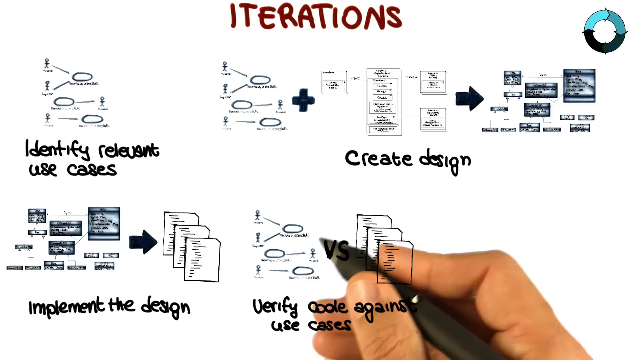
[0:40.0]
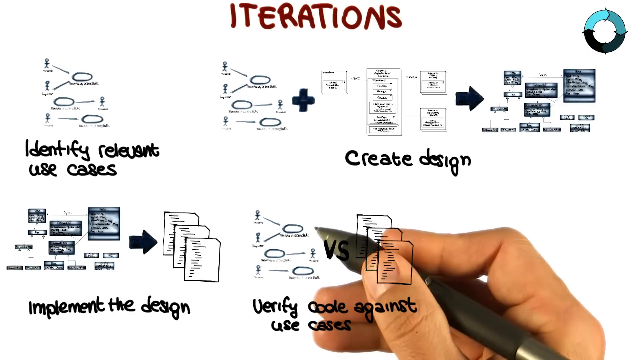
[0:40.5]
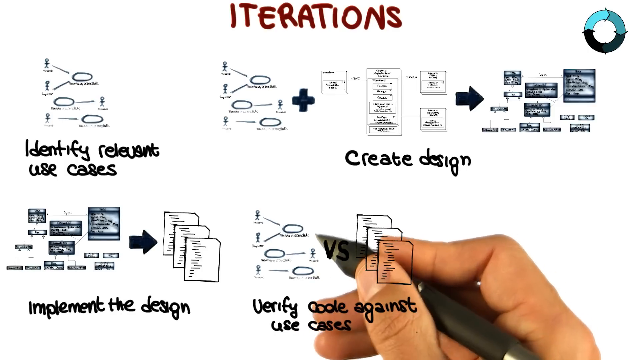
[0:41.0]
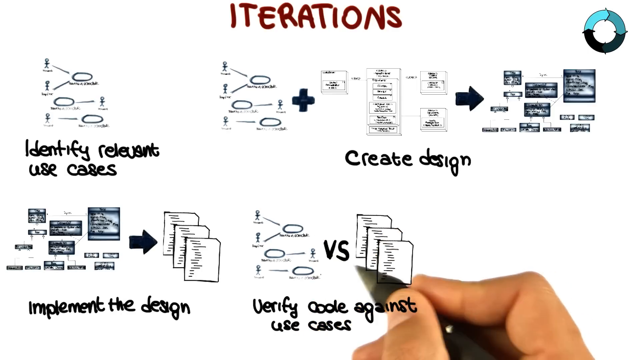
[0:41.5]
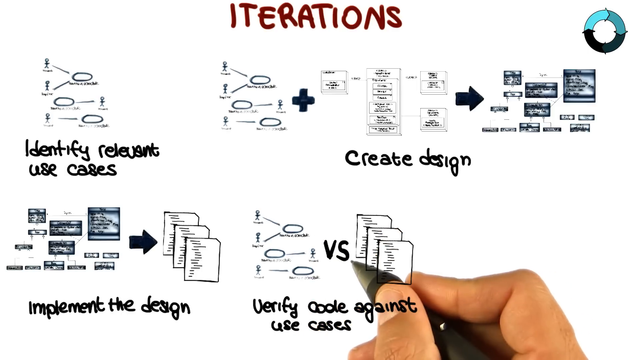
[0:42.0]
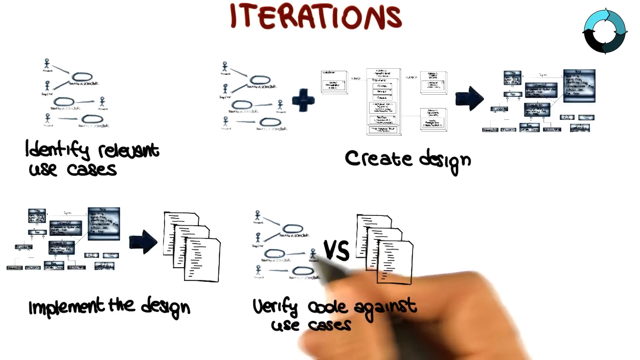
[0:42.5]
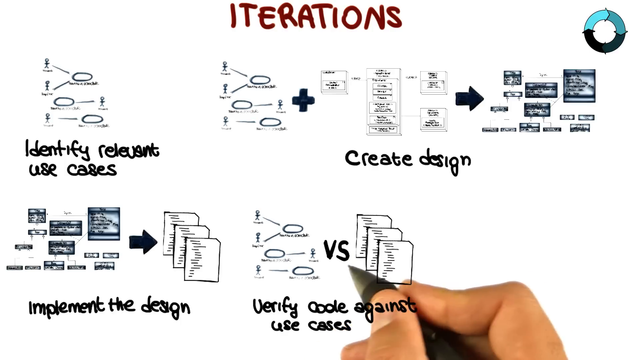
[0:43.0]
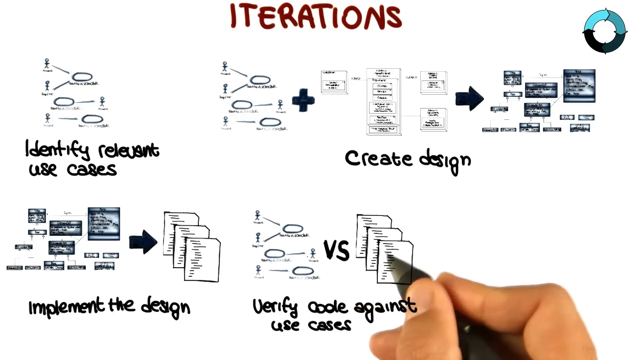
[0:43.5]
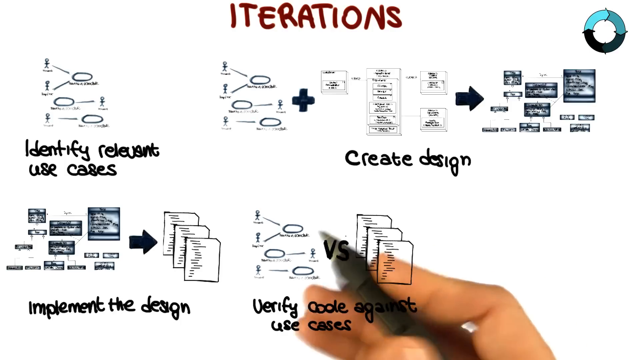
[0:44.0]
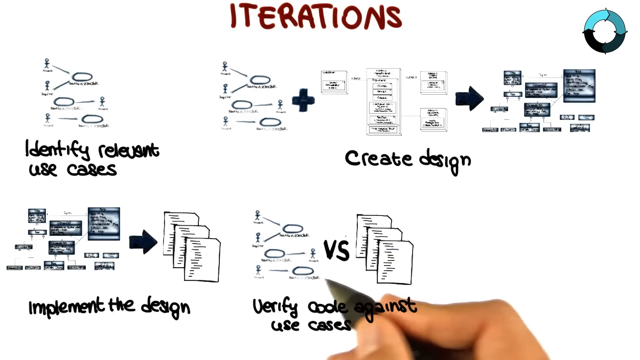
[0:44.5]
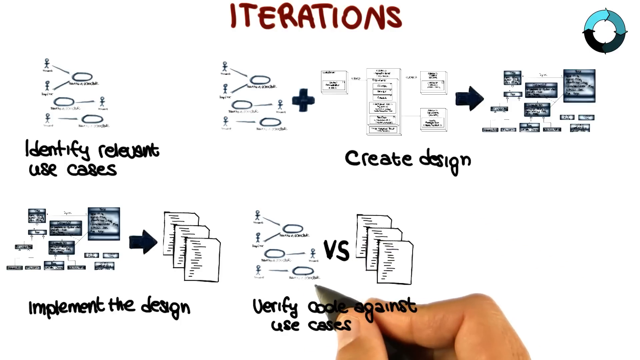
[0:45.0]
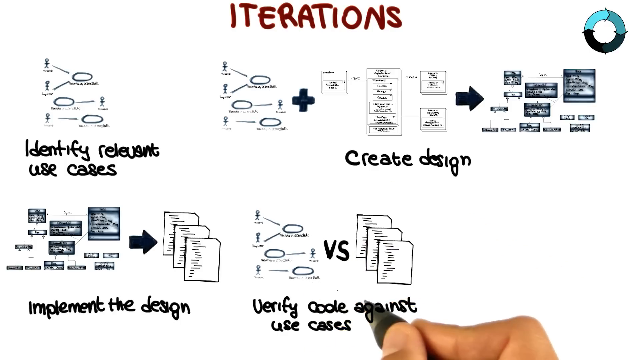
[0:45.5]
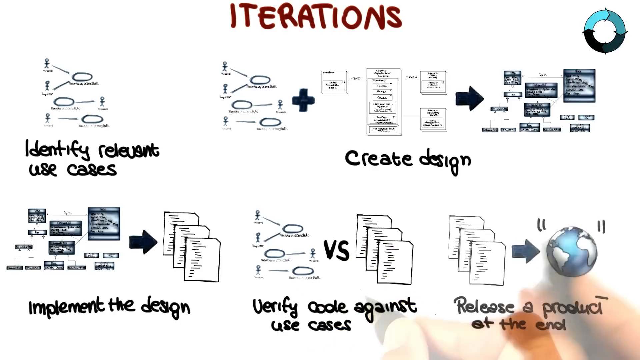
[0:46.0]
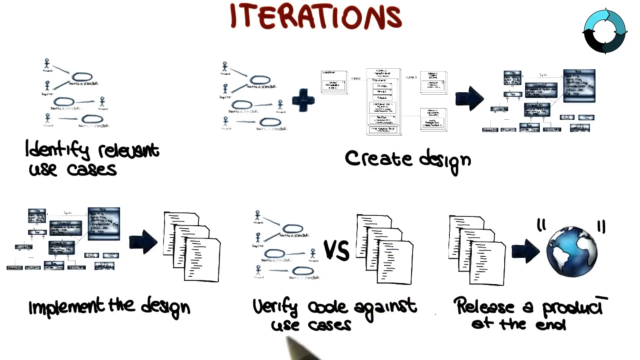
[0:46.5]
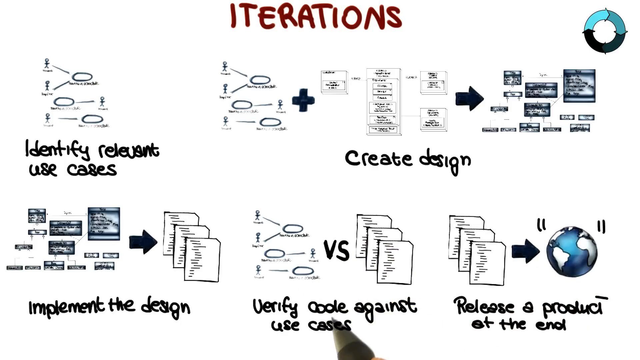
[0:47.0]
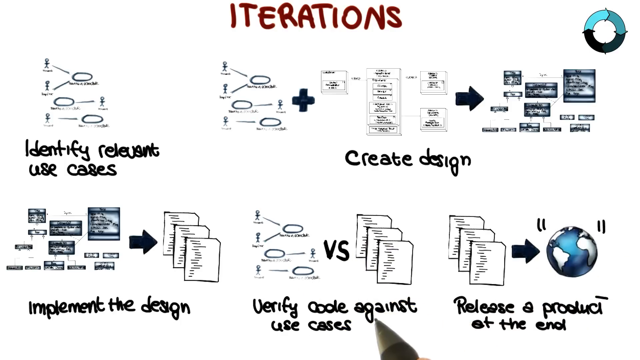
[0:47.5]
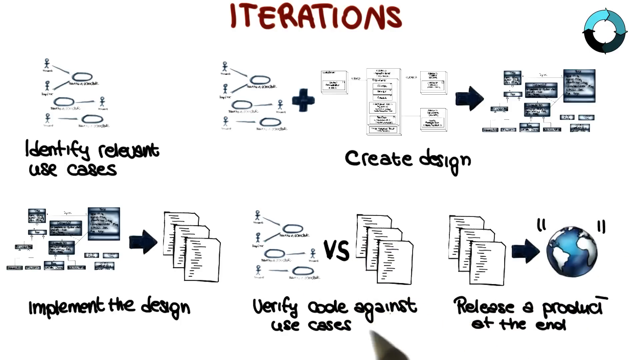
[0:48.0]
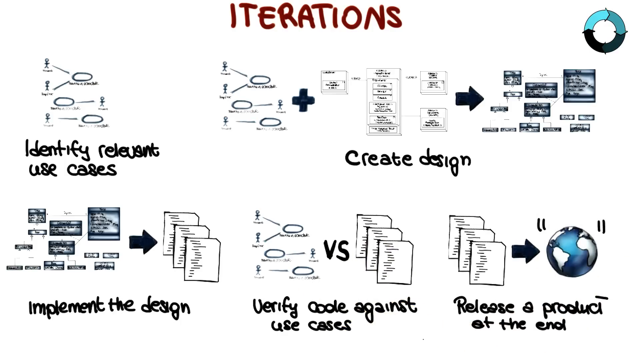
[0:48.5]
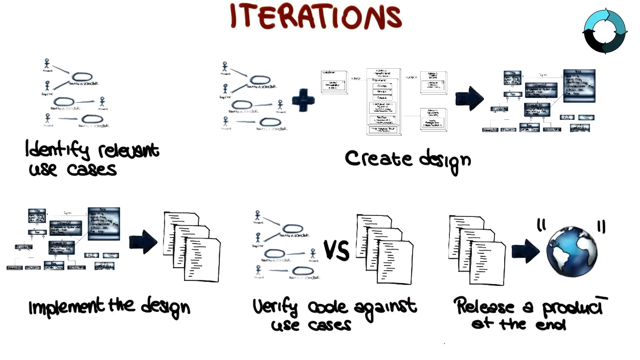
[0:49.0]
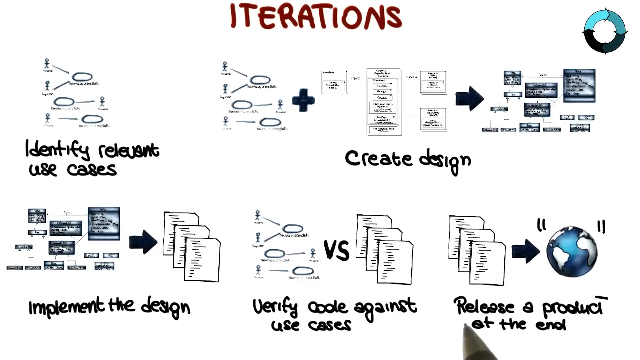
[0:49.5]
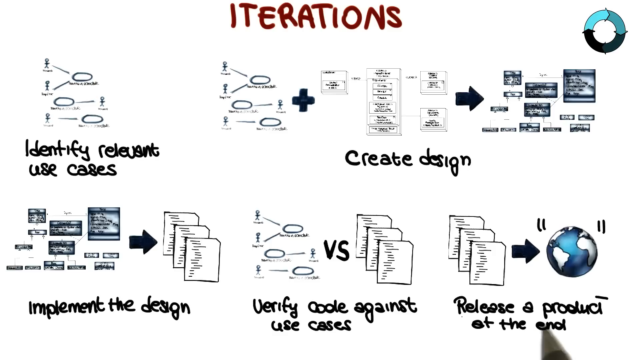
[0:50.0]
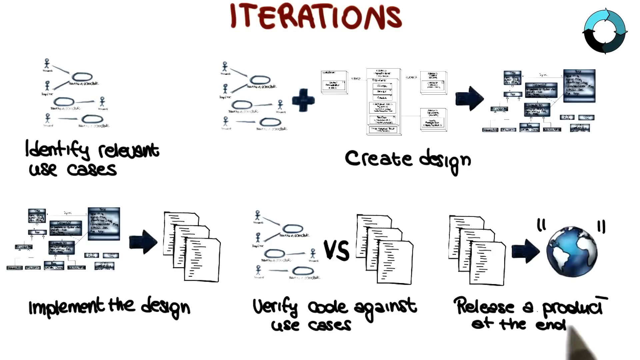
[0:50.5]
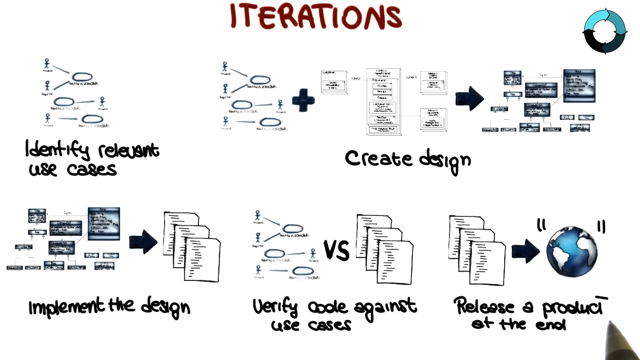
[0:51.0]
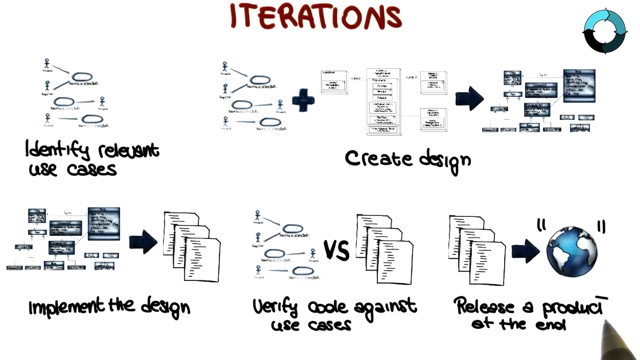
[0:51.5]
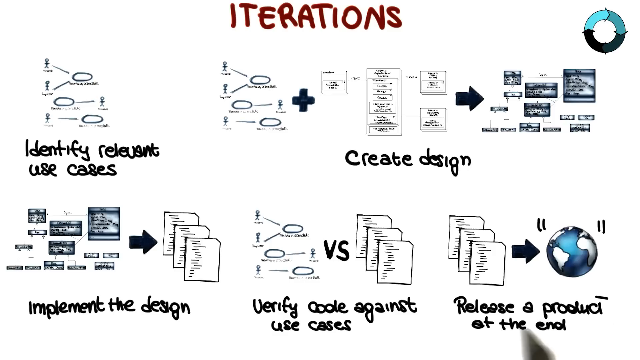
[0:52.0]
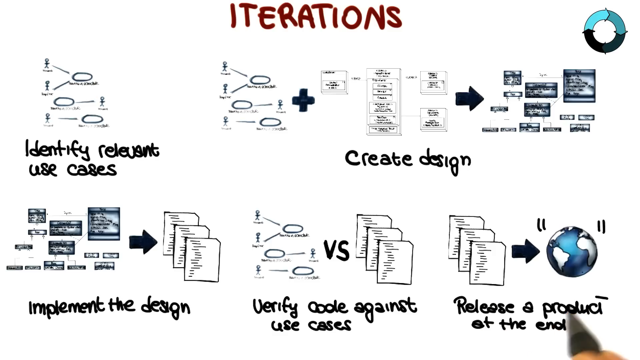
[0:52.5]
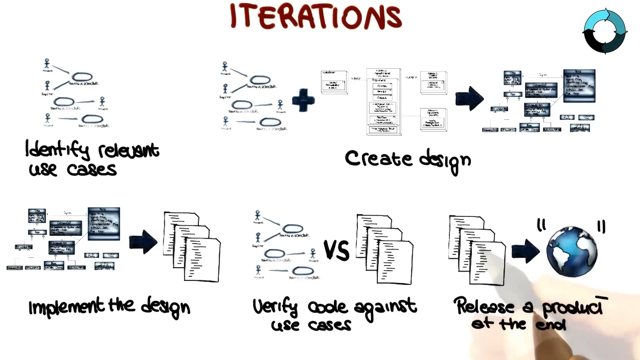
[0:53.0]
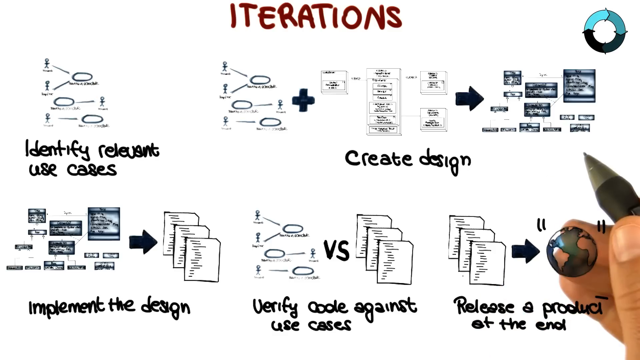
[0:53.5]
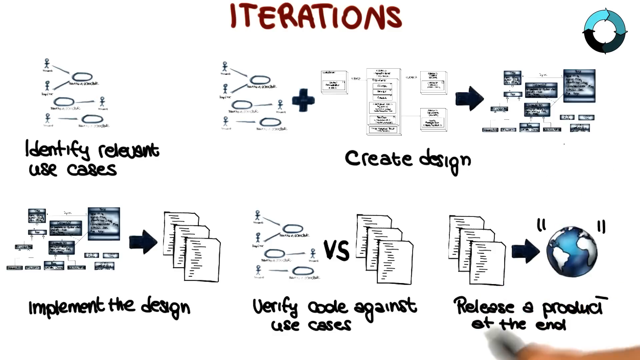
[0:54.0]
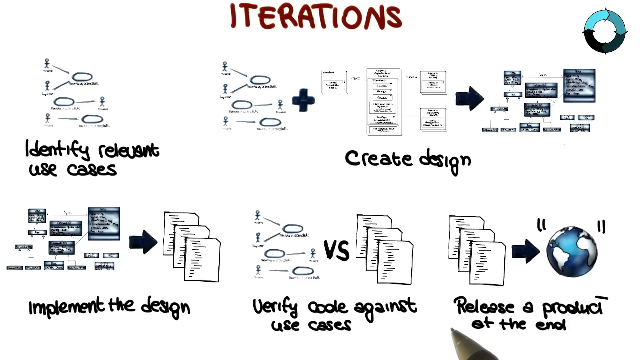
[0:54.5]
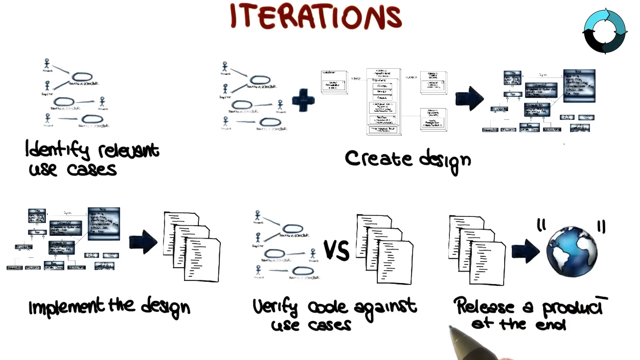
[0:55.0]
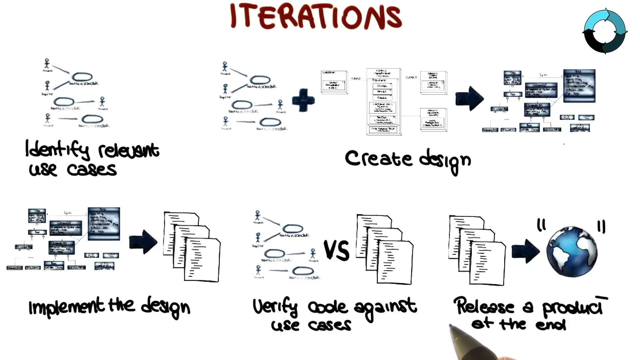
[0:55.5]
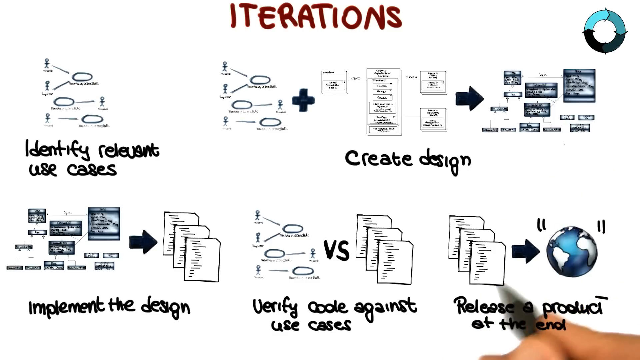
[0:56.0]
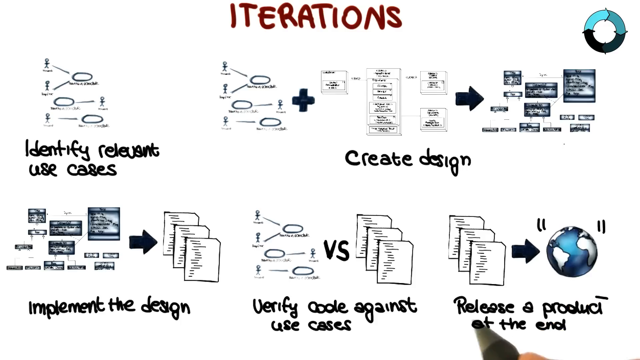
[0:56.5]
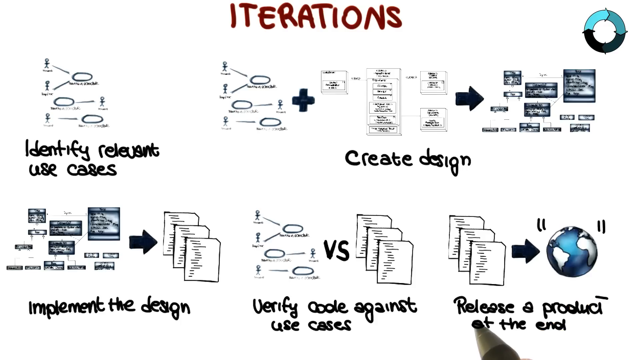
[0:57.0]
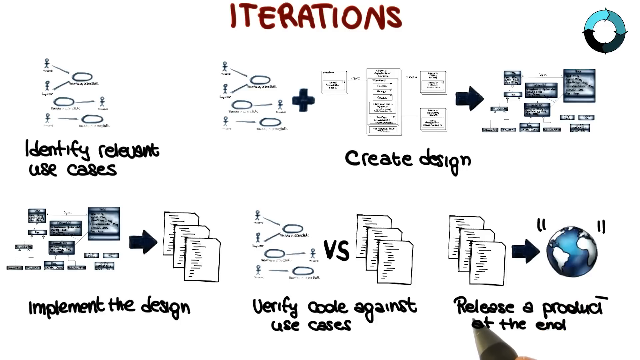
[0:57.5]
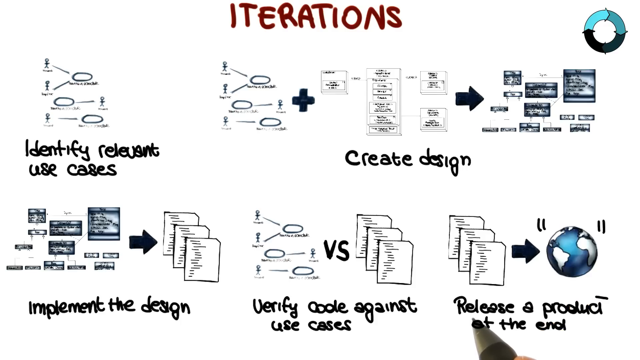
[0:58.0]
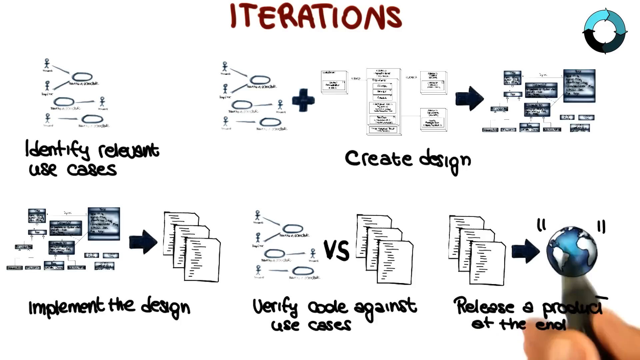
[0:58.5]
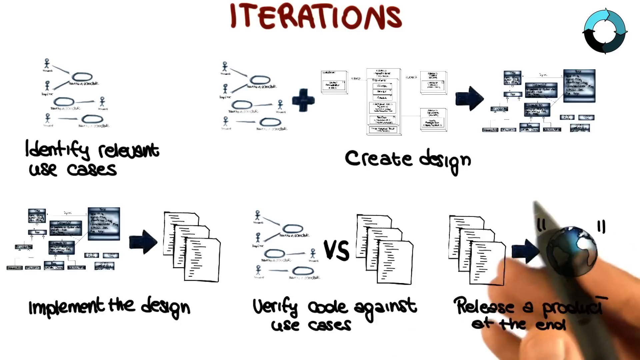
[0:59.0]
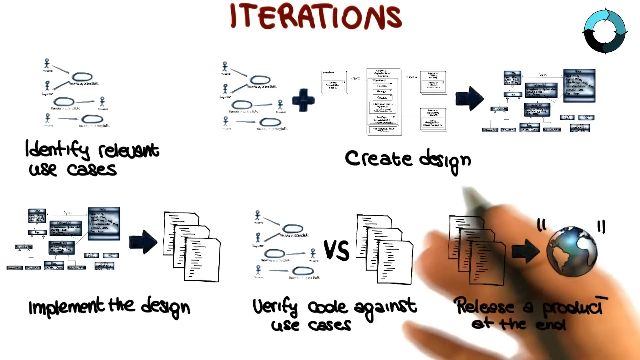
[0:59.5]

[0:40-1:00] The hand moves around next to the fourth image, making circling motions with the stylus pen. The last image then appears in the bottom right, following on from the previous image by using an element of it, so that the images form something almost like a flow chart in which each leads on from the last. It is labeled "release a product" in the same black handwriting style. The hand with the pen hovers around it, motioning toward it and circling. The completed chart goes from identifying relevant use cases to creating a design, implementing the design, verifying the code against use cases, and finally releasing a product, with an illustration accompanying each step to create the flow.